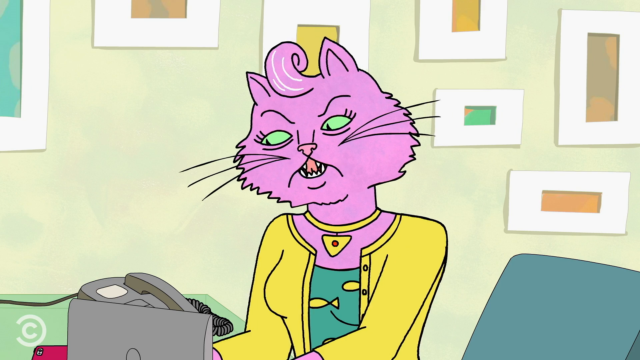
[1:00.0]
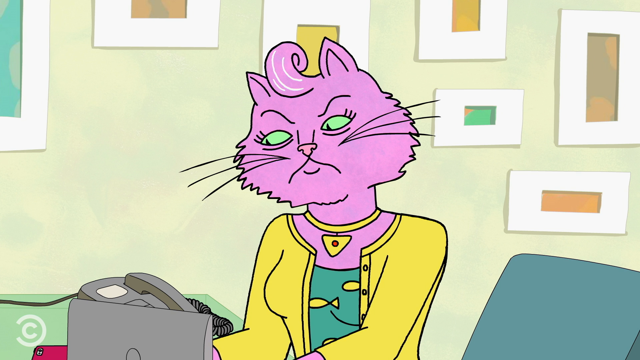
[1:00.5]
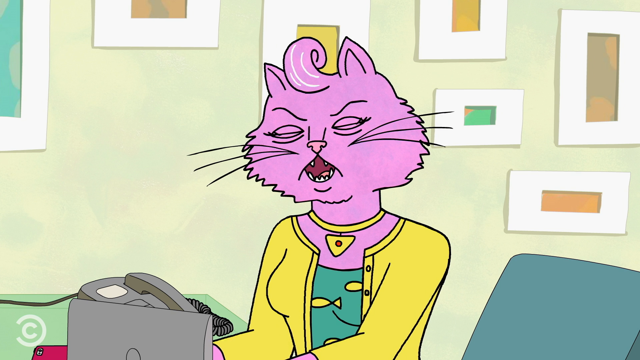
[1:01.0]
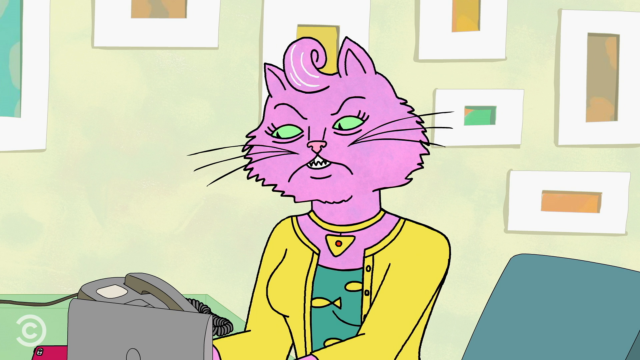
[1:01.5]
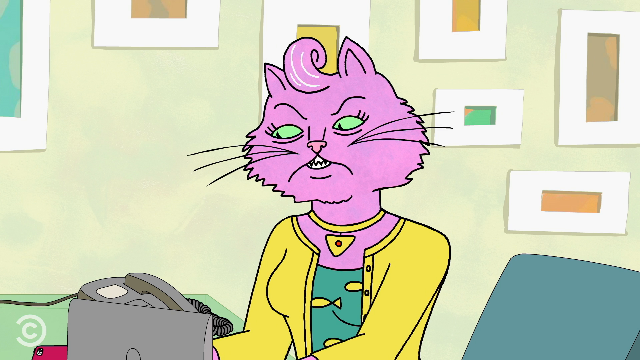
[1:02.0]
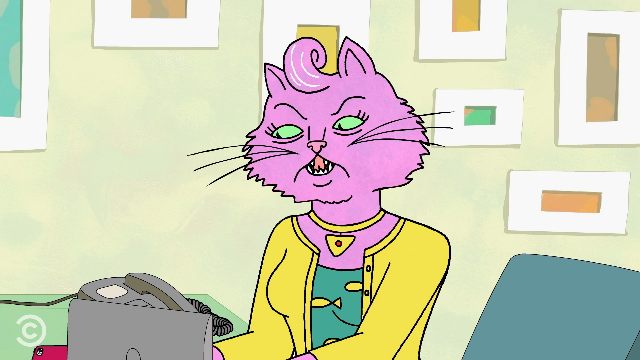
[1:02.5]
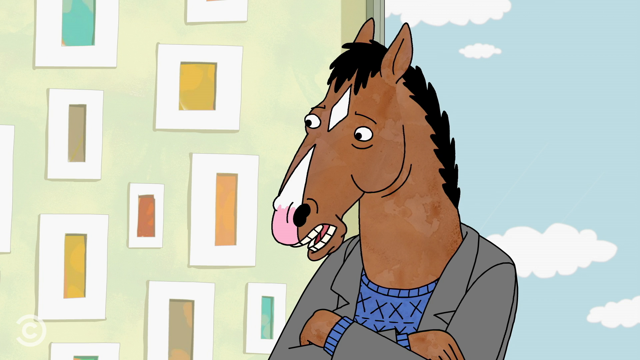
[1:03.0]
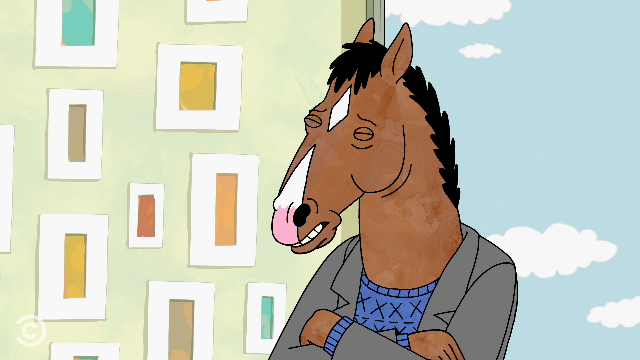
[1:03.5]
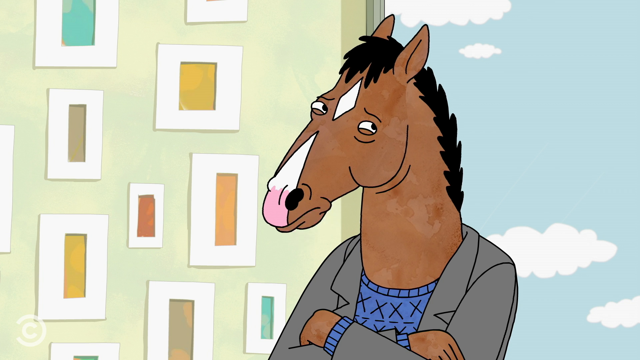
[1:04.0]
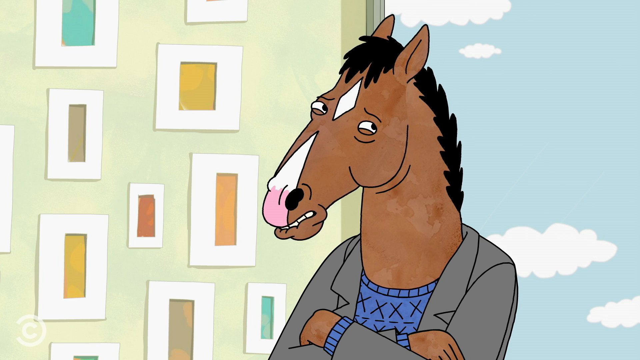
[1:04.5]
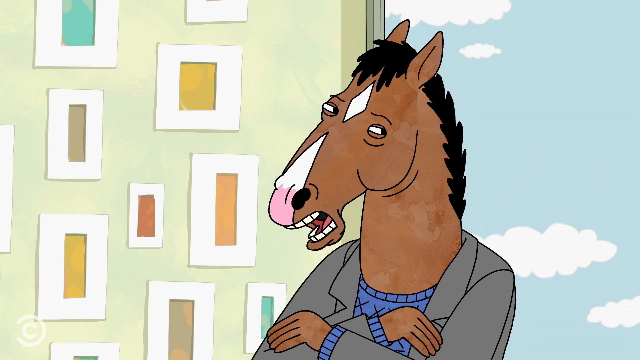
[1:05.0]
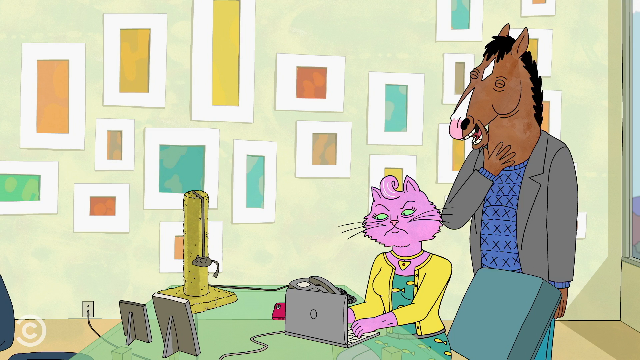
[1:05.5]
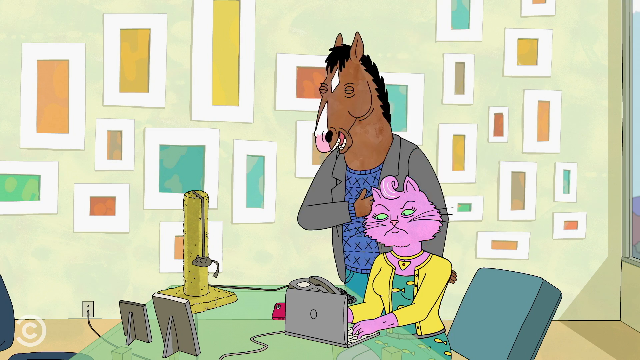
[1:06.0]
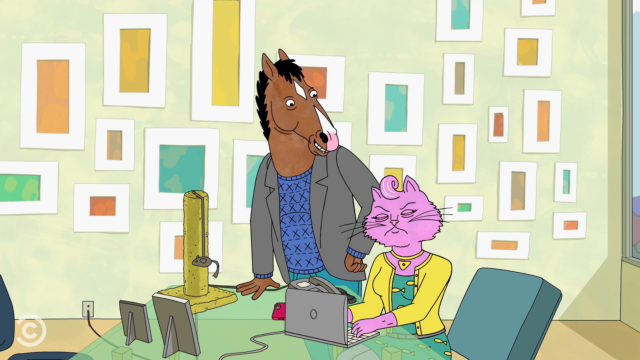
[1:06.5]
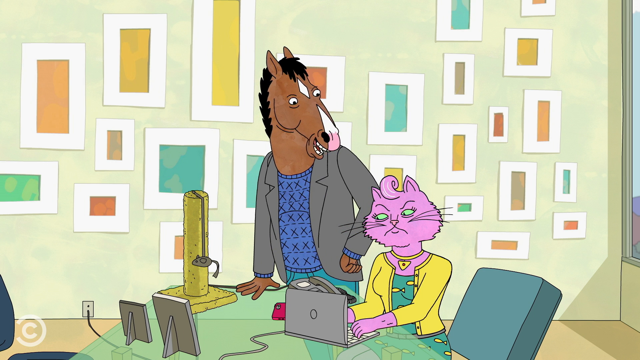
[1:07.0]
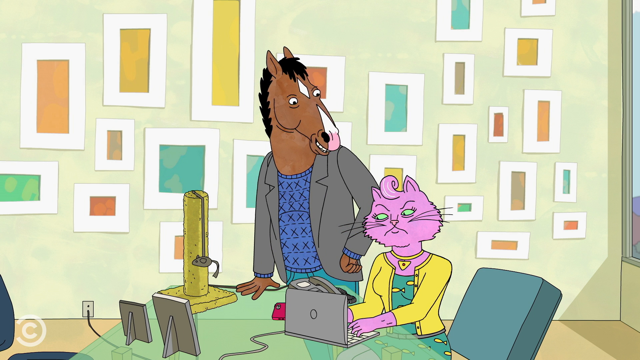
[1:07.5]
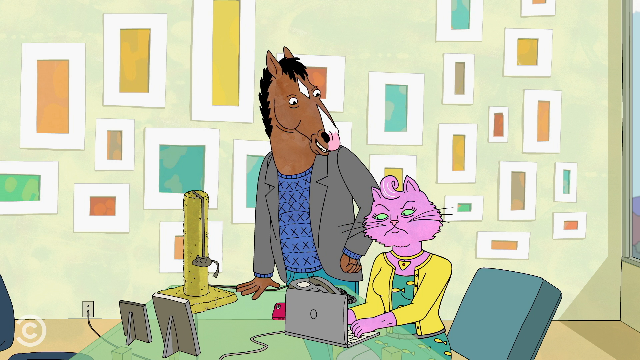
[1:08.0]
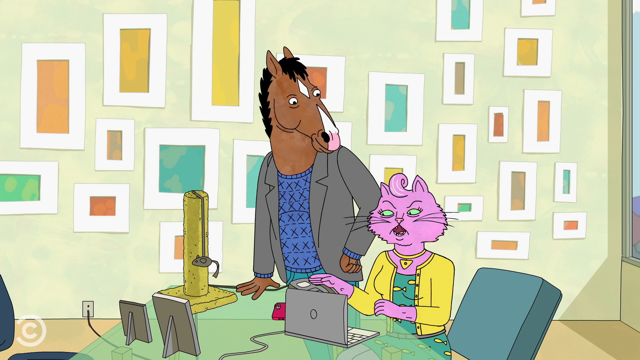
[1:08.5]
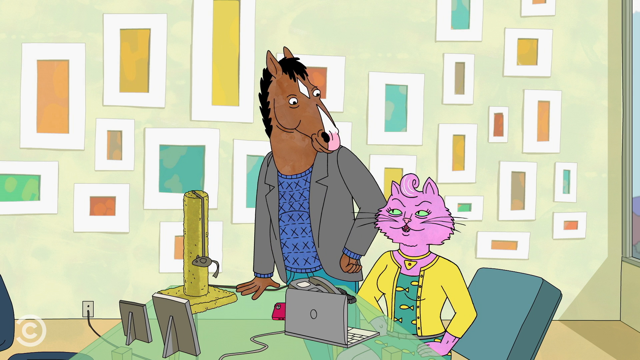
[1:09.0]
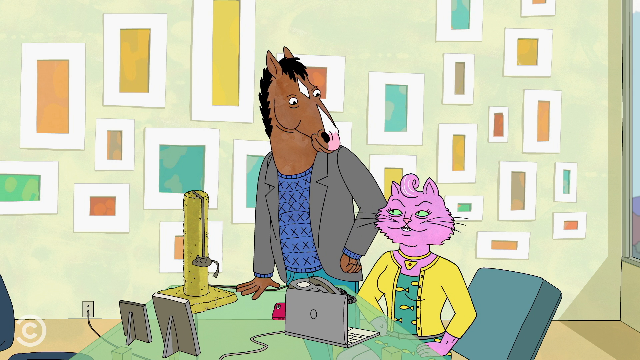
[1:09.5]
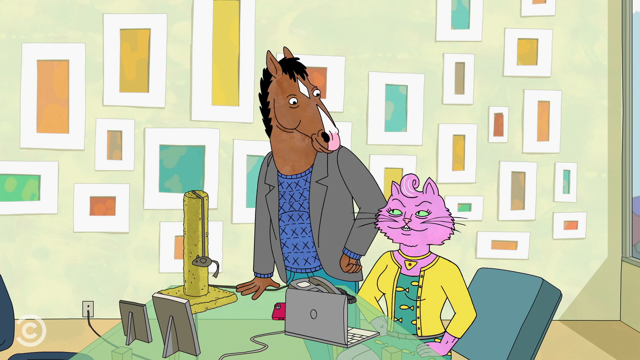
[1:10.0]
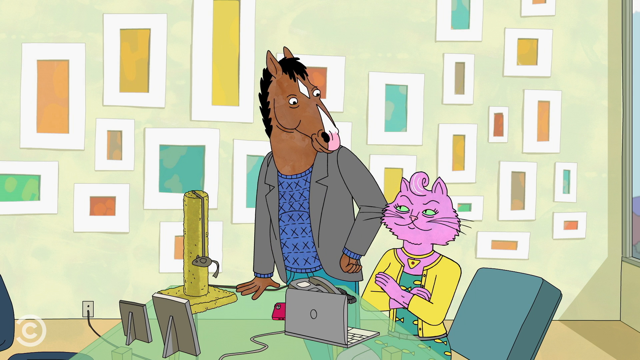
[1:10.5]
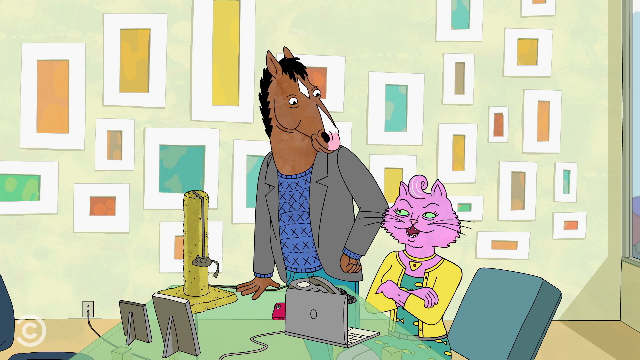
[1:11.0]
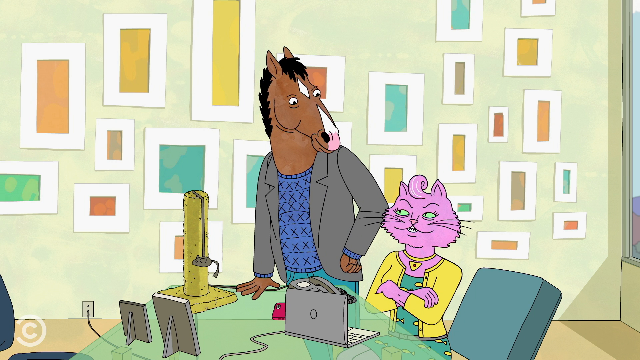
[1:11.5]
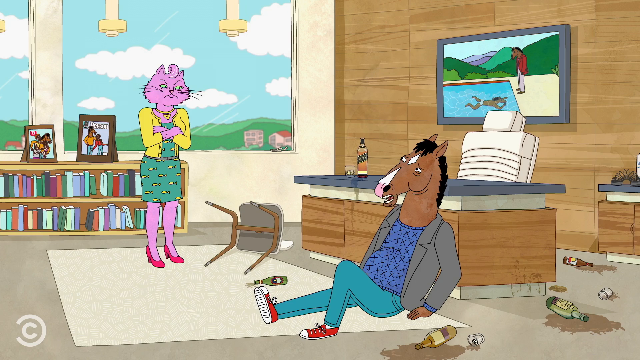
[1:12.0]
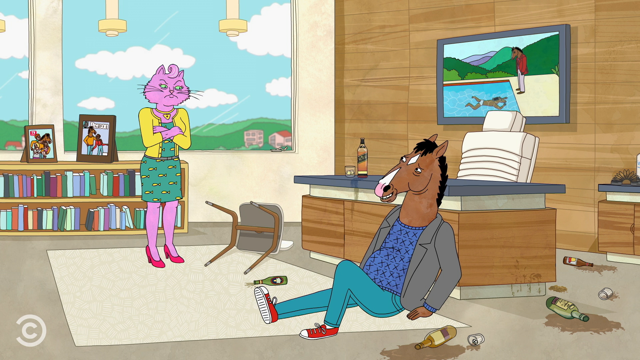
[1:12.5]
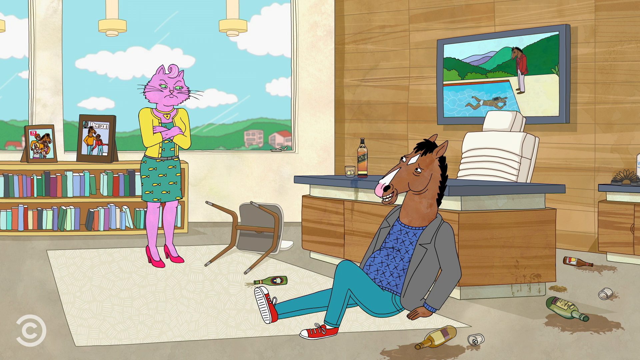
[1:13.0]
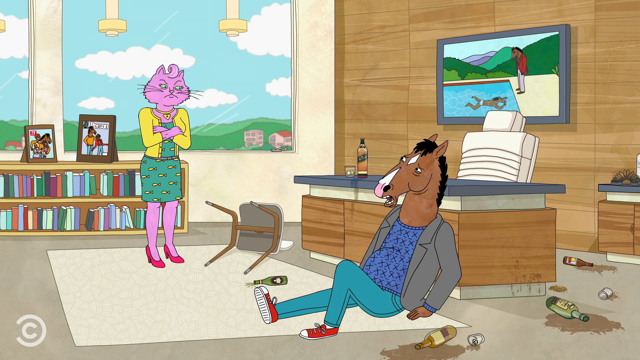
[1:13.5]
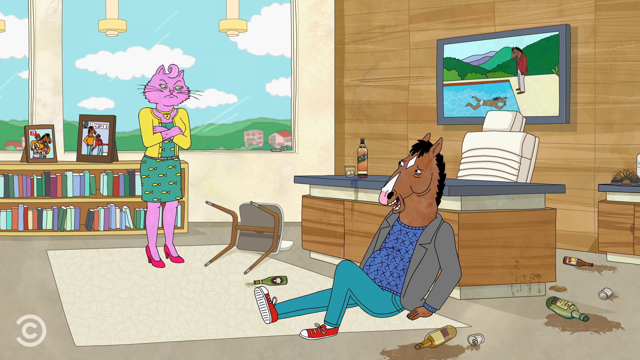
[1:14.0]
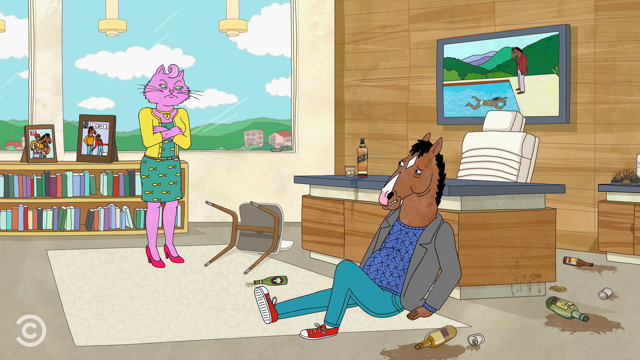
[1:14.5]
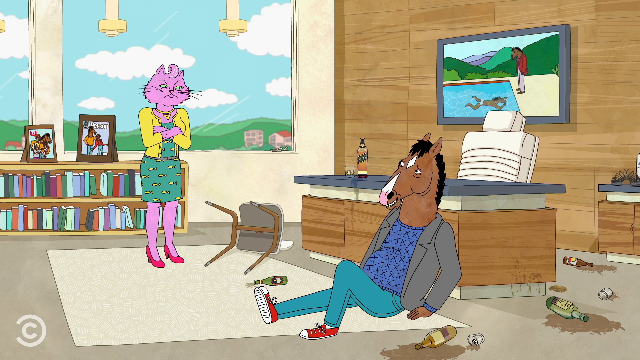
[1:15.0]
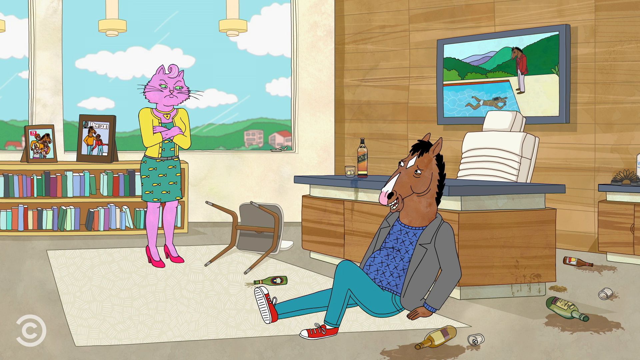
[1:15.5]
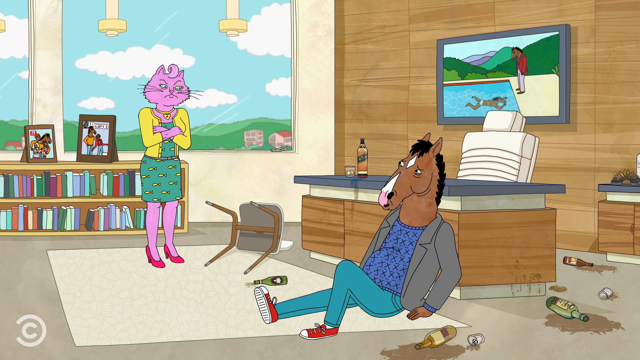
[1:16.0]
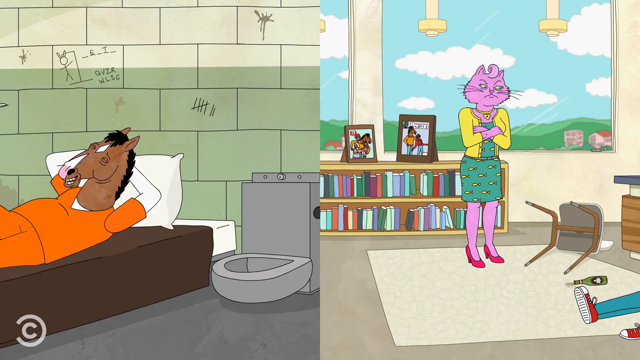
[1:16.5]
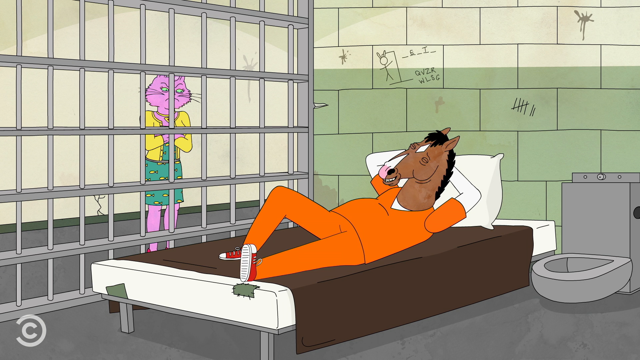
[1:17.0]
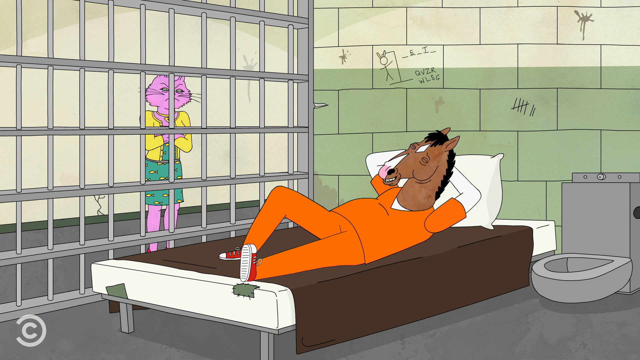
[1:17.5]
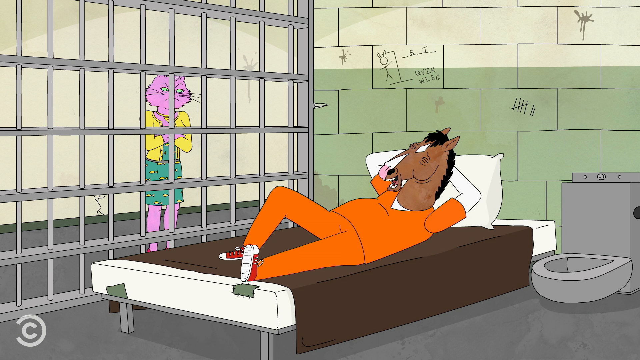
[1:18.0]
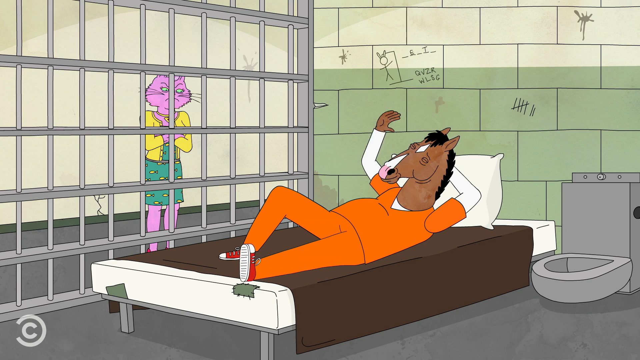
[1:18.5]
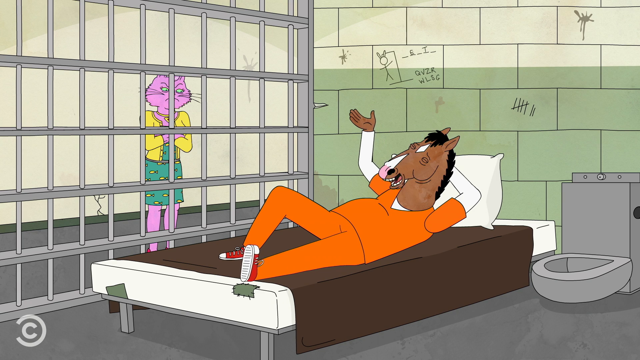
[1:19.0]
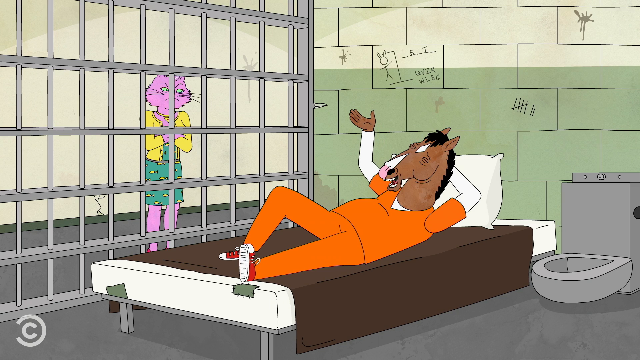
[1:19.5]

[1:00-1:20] A close-up shows the cat typing on her laptop while talking, sitting on a green chair in front of a wall with pictures; the telephone is just visible at the bottom left of the screen. The video cuts to the horse, who looks a bit worried and is talking, standing in front of the window, with the window behind him on the right and the wall with pictures on the left. He puts his hand toward his chest and walks toward the cat. In the office, the cat sits at the desk still typing; the horse walks behind her from the left, looks down at her and places his hand on the table, resting his hands on it as he talks. She keeps typing, then stops, puts her hands down beside her, looks up at the horse and folds her arms. The scene cuts to a different office. The horse sits on a rug on the floor, there is a chair, and the cat stands in front of a window with clouds and hills outside. Behind her is a bookcase with two picture frames, and on the right the back wall of the office has a screen showing a horse looking at somebody swimming in a swimming pool, with green scenery behind. The horse sits on the floor resting against a desk with a black top and a white chair; behind him are empty beer bottles with spilled liquid. An upturned chair is to the left of the desk. The cat stands wearing red shoes, arms folded, looking very angry and unamused, while the horse looks up at her sheepishly. The scene cuts to a prison cell where the horse lies on a bed with a brown blanket, his head on a pillow and his hands behind his head, wearing an orange prisoner's jumpsuit. A metal toilet is to his right. The cell wall behind him has big tiles, green halfway up and white above, with graffiti on it. To his left are the vertical bars of the cell. The cat is on the other side of the cell door, arms crossed, staring at the horse and looking very angry, while he talks and gestures with his arms.